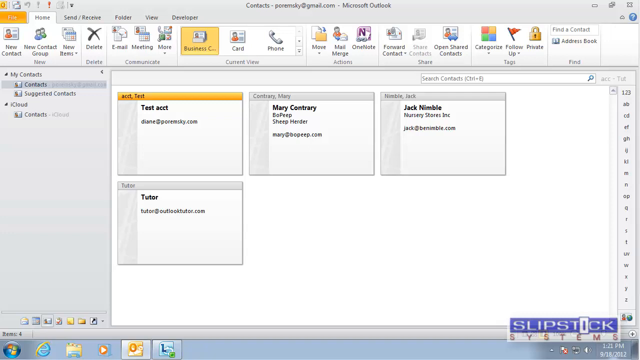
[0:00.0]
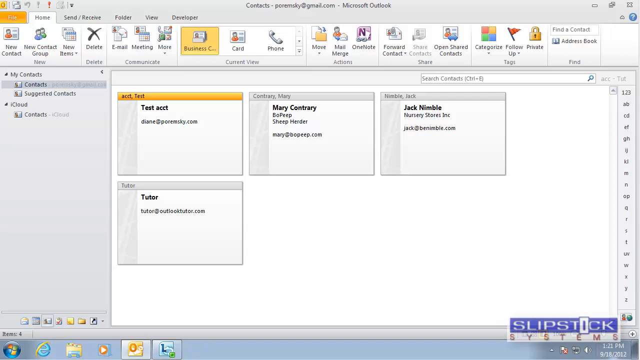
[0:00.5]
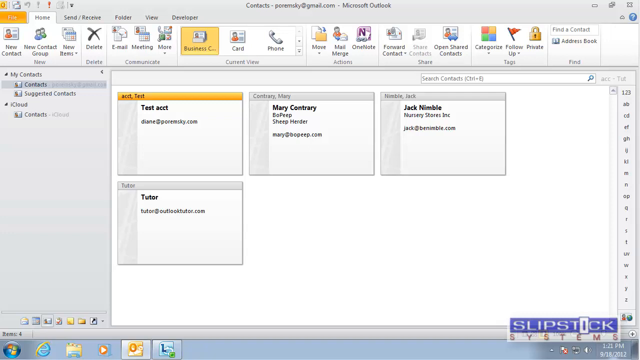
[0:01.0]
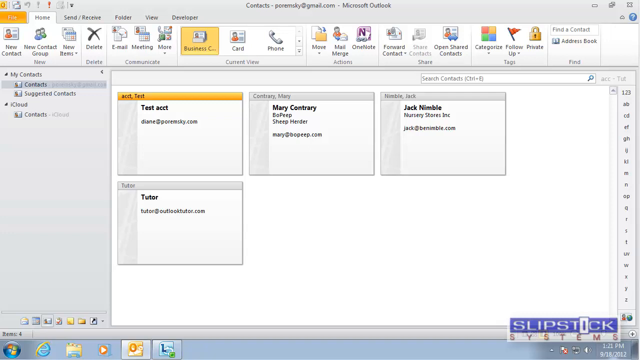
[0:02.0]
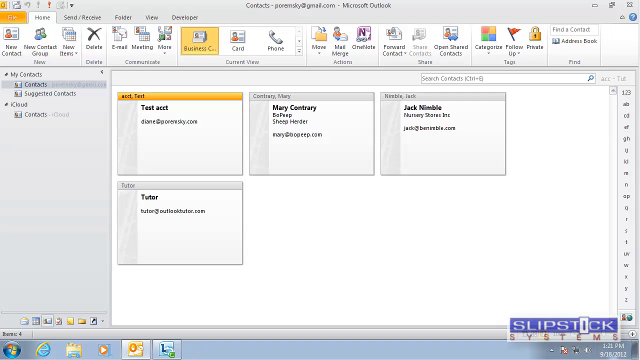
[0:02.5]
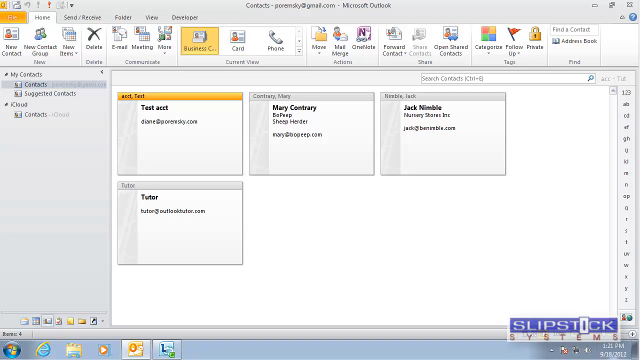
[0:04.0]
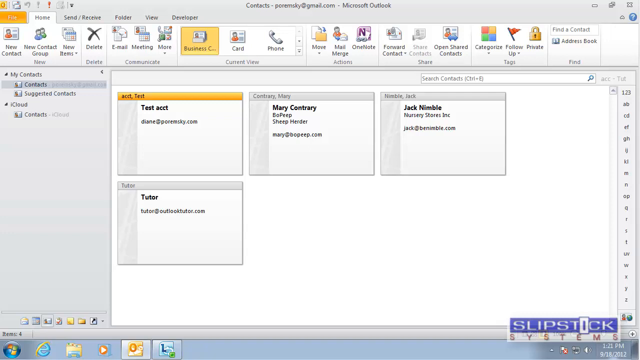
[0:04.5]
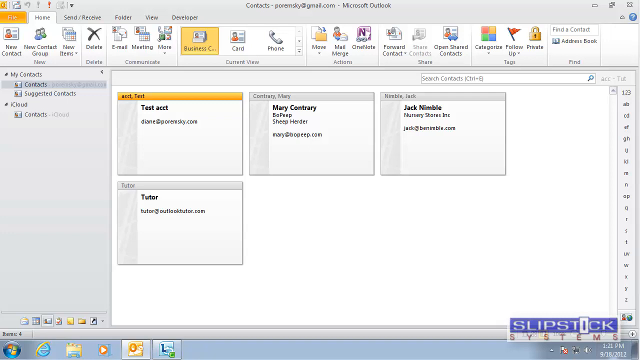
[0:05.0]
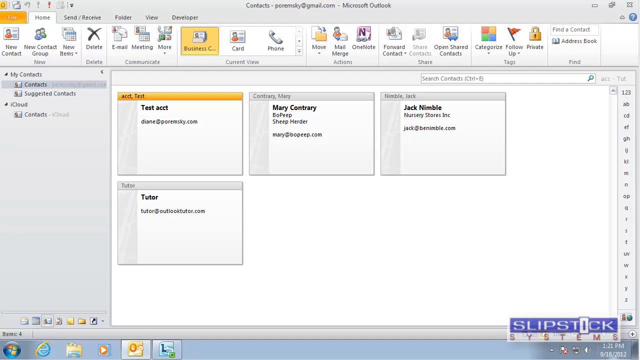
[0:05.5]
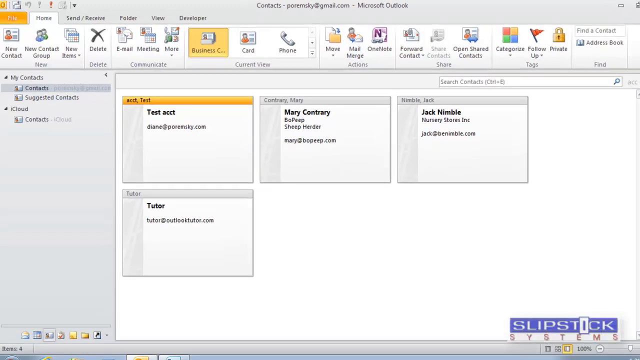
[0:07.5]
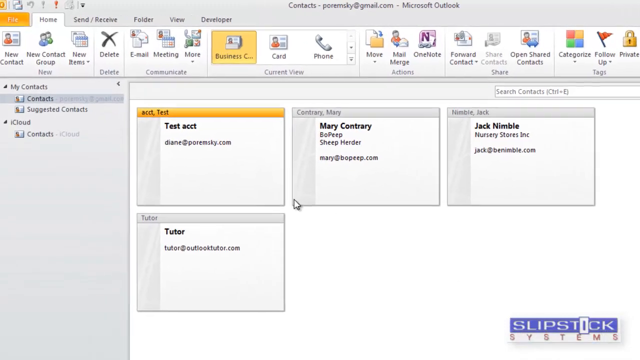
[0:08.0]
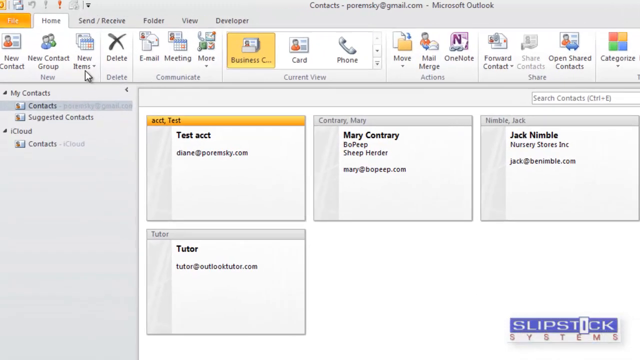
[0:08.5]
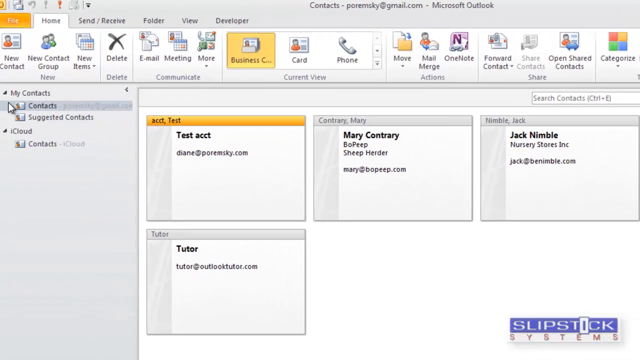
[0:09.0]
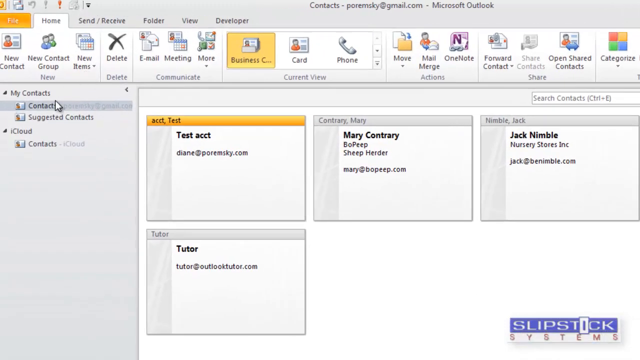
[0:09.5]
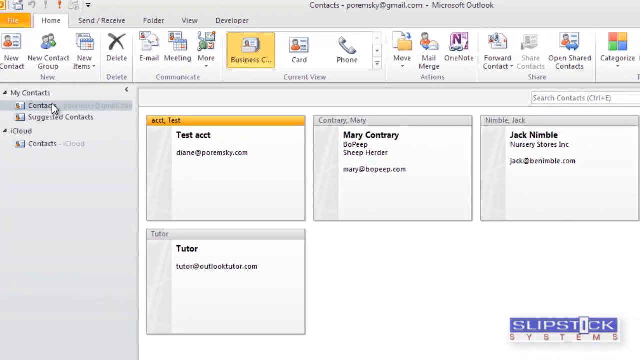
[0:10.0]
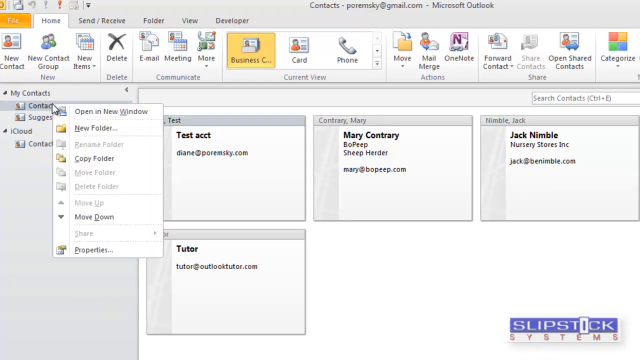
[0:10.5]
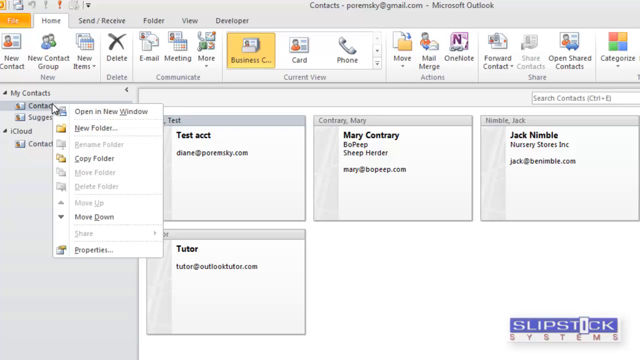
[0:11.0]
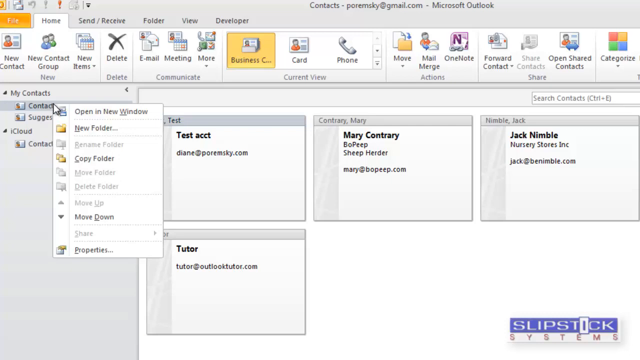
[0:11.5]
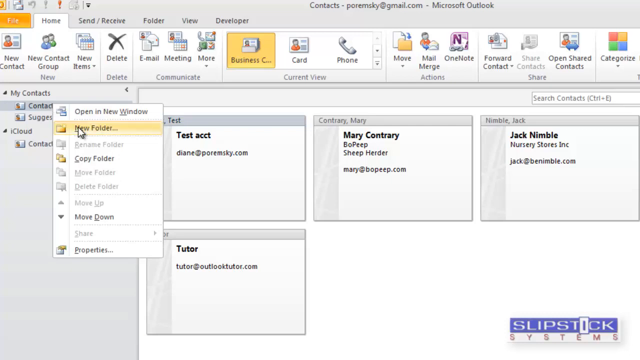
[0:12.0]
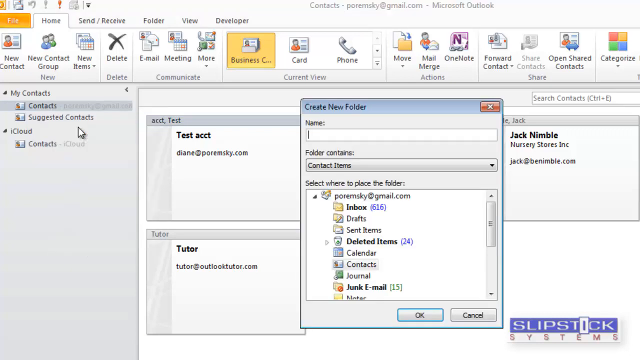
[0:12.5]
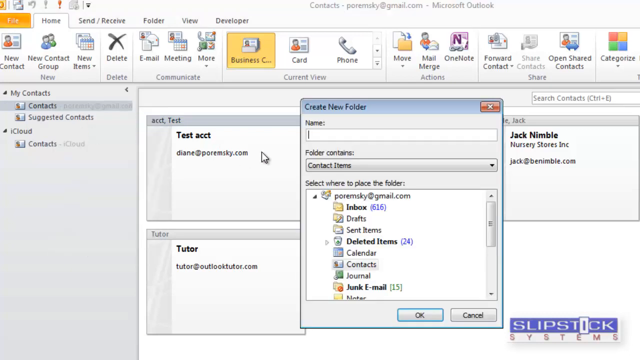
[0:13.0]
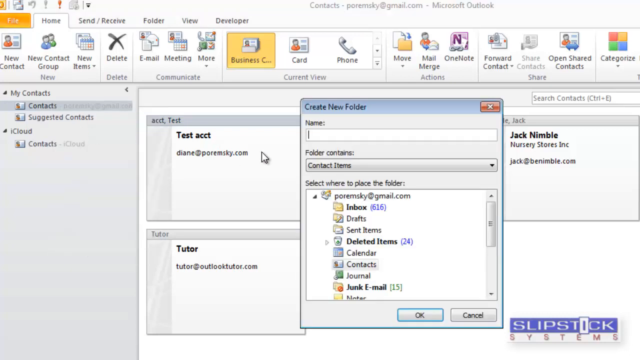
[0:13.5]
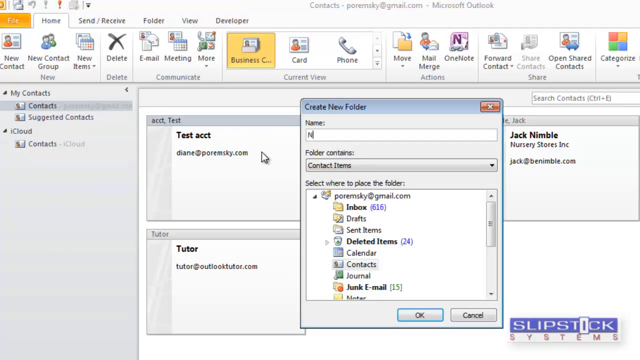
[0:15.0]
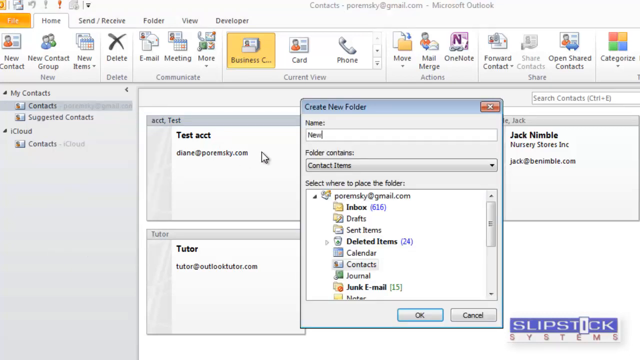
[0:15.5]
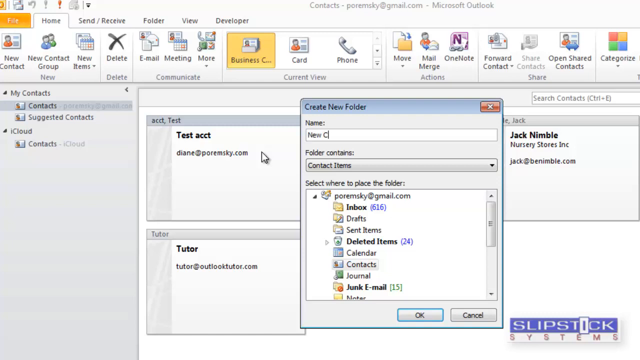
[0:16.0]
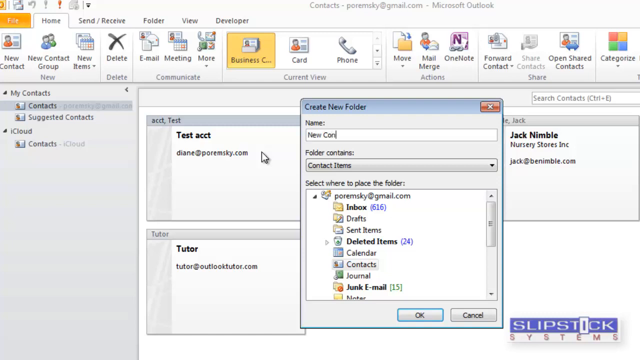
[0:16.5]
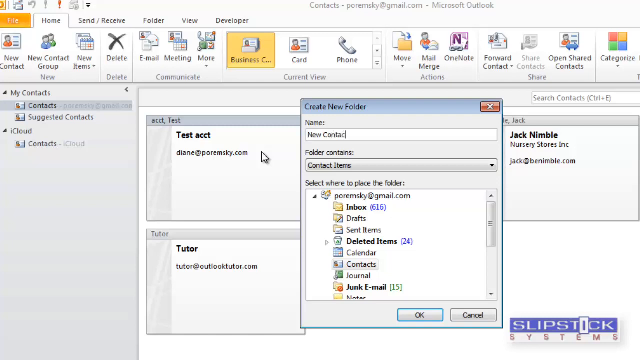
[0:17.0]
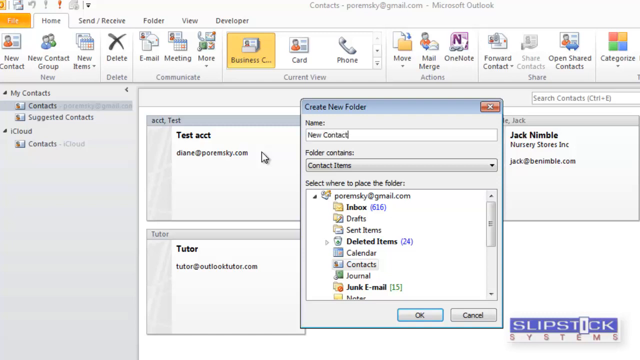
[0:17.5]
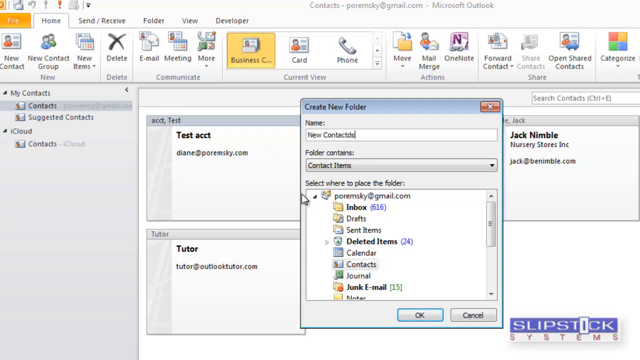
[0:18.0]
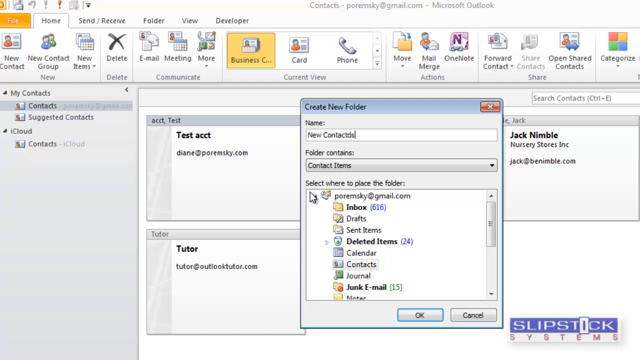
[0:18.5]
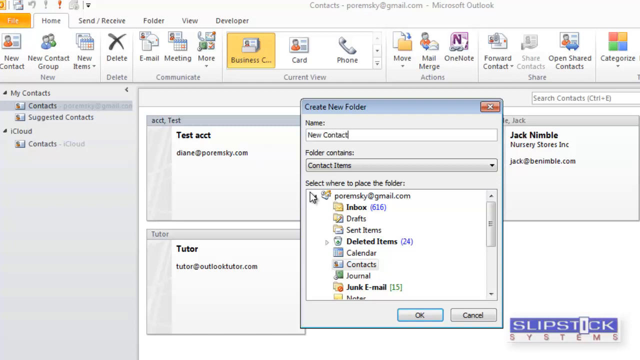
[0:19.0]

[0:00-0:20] A computer program displays several options, more than ten, across the very top of the screen, including one to create a new contact. On the left side is a panel that says "contact," with a subsection that says "contact" and "suggested contact." Next to these are little icons indicating a contact reaching out to someone. In the middle, the main portion of the screen, there are four mid-sized boxes with names, and one box at the beginning says "test account." The test account box is highlighted in yellow and has a little bar at the very top showing an abbreviation for account, a comma, and "test." The video zooms in on the section that says "contact," showing that right-clicking it gives the option to create a folder.